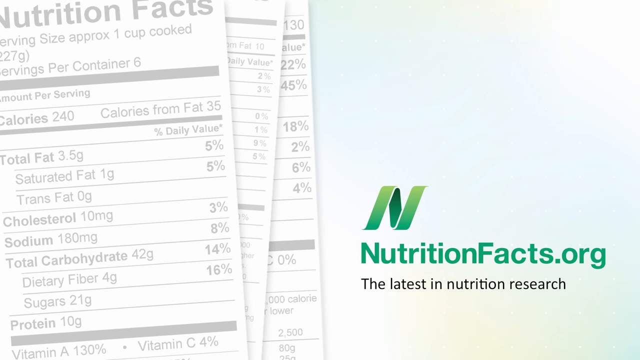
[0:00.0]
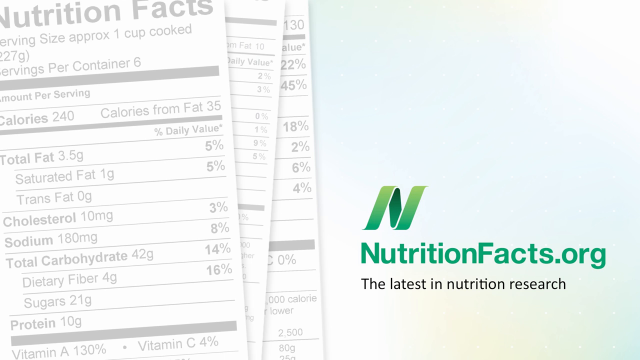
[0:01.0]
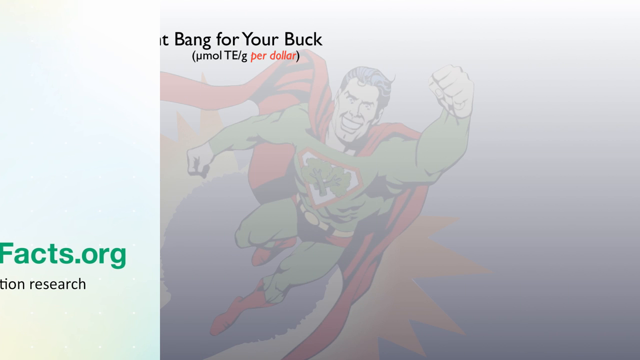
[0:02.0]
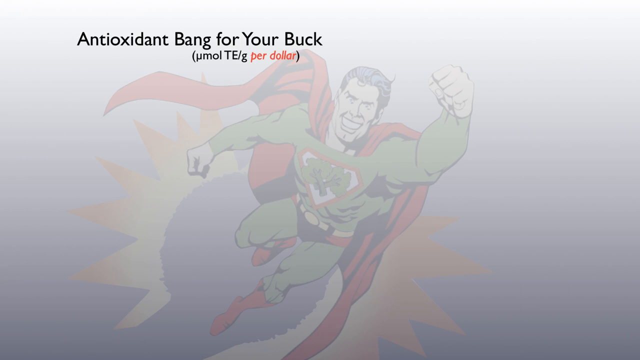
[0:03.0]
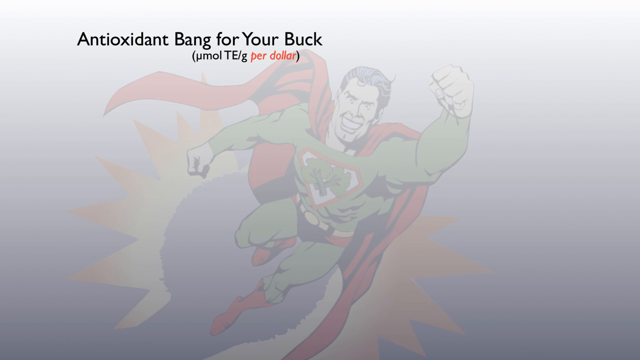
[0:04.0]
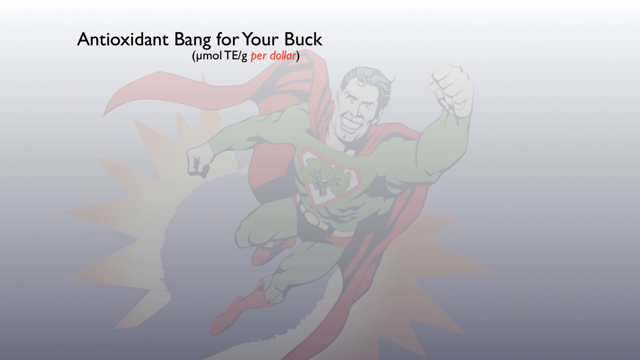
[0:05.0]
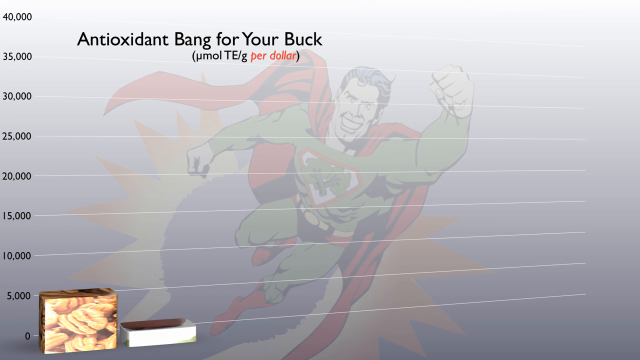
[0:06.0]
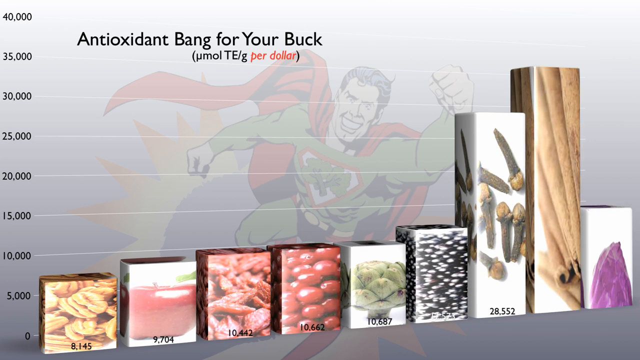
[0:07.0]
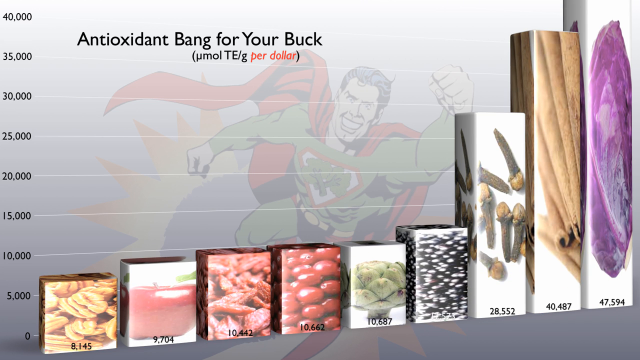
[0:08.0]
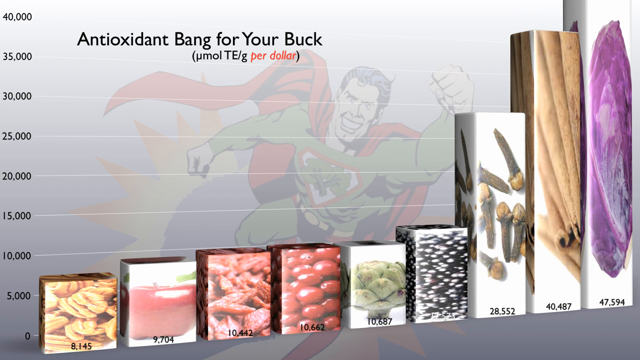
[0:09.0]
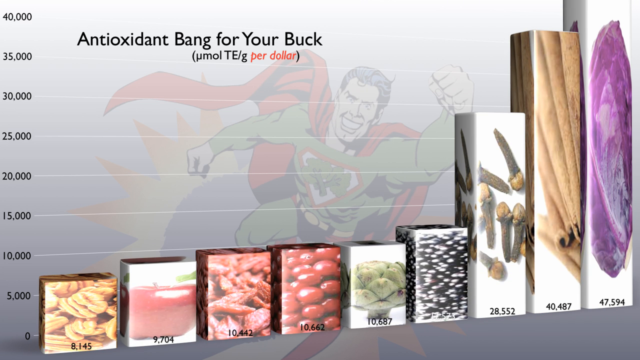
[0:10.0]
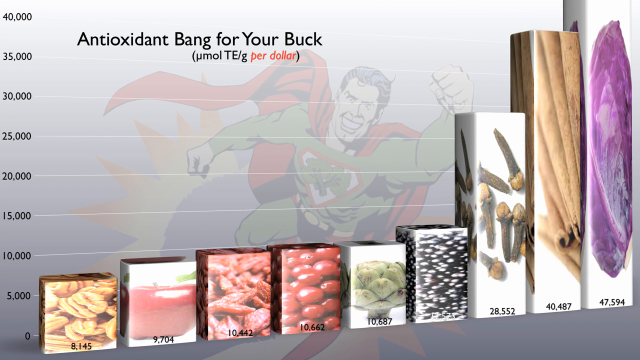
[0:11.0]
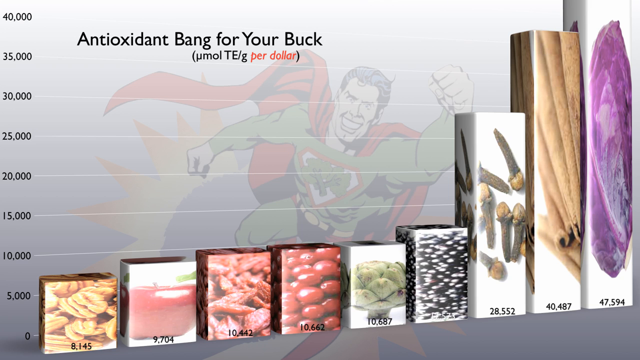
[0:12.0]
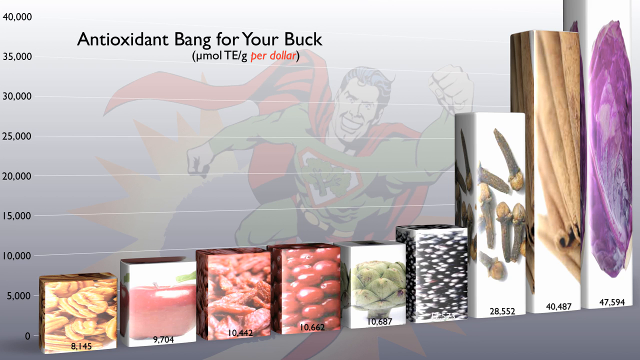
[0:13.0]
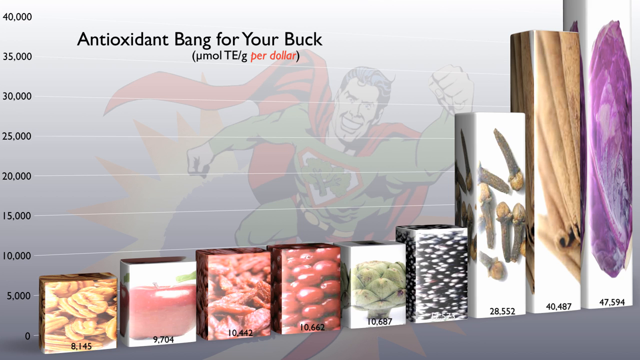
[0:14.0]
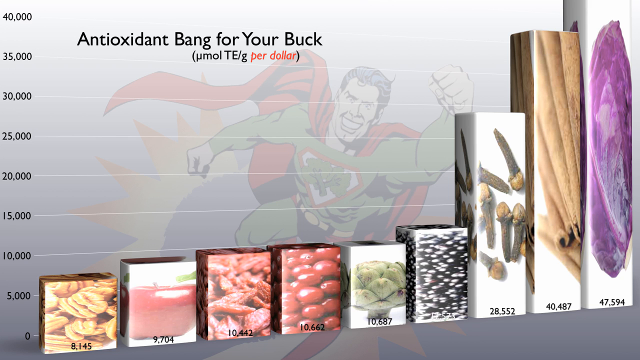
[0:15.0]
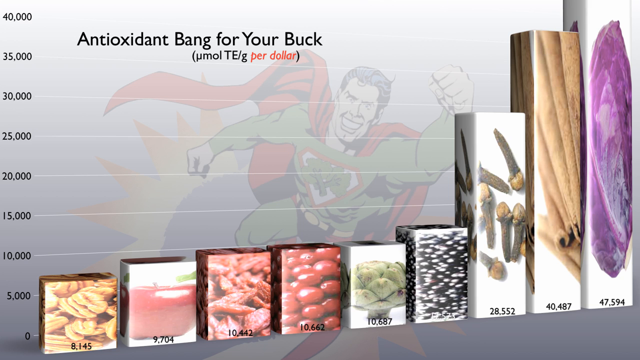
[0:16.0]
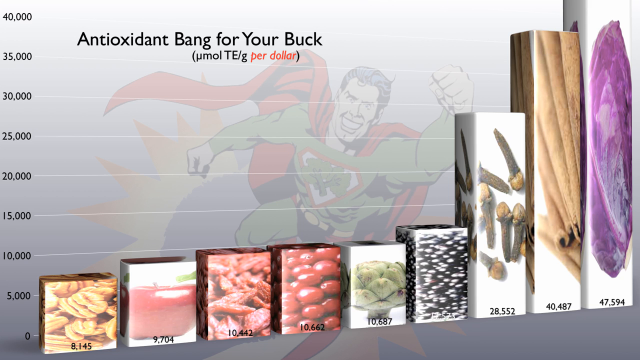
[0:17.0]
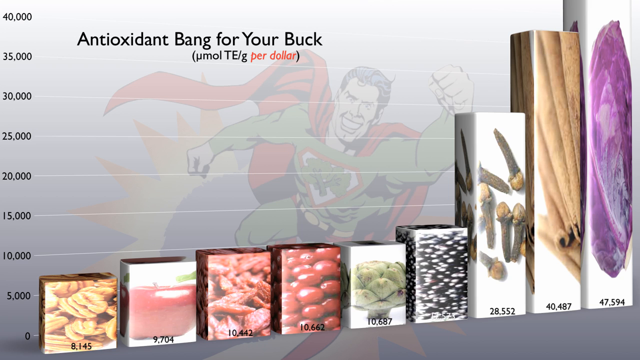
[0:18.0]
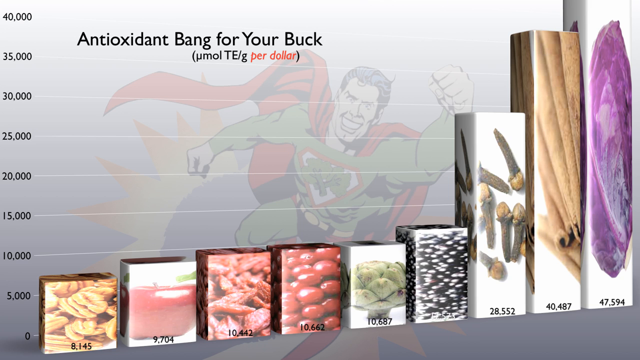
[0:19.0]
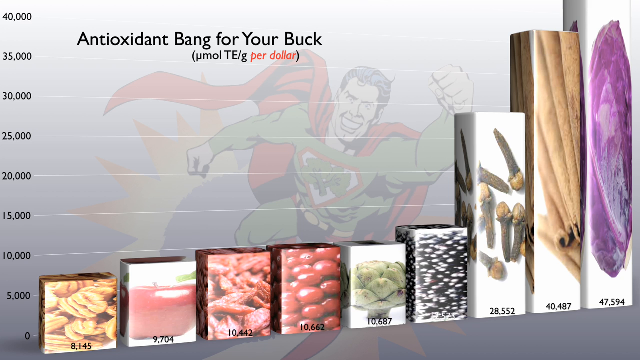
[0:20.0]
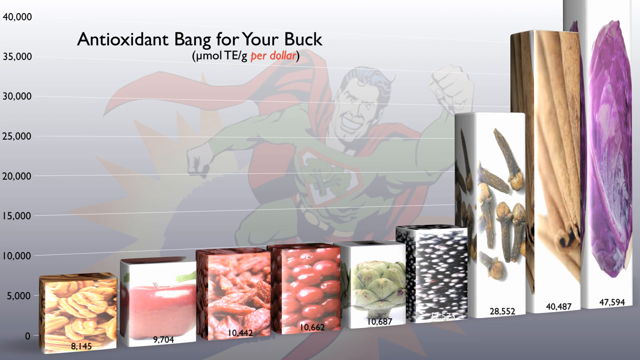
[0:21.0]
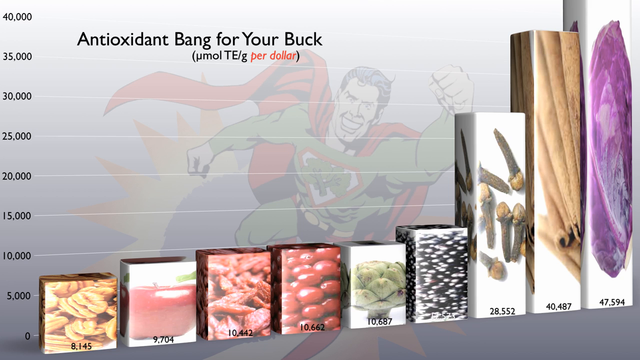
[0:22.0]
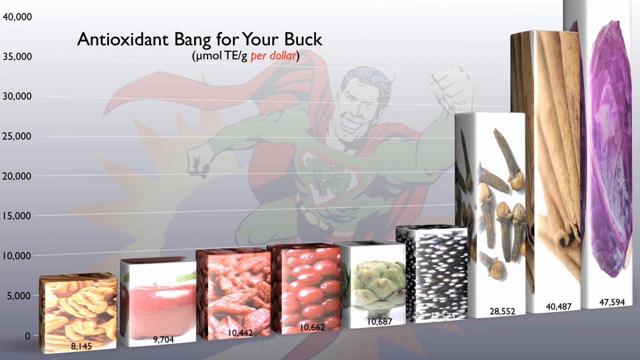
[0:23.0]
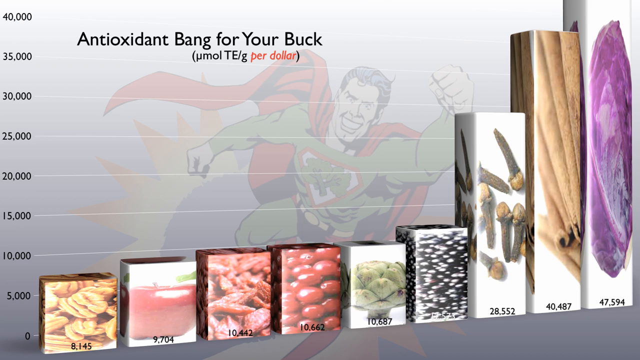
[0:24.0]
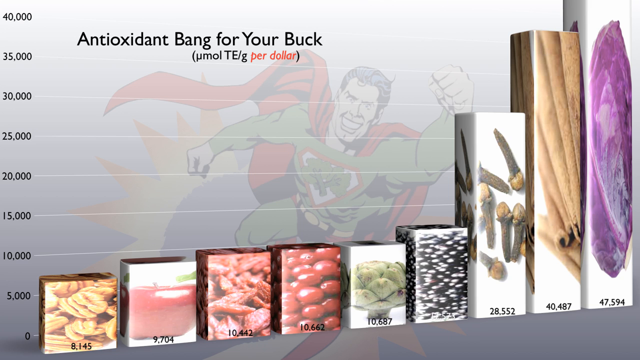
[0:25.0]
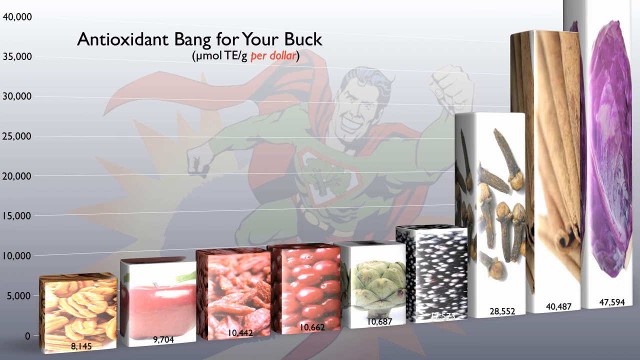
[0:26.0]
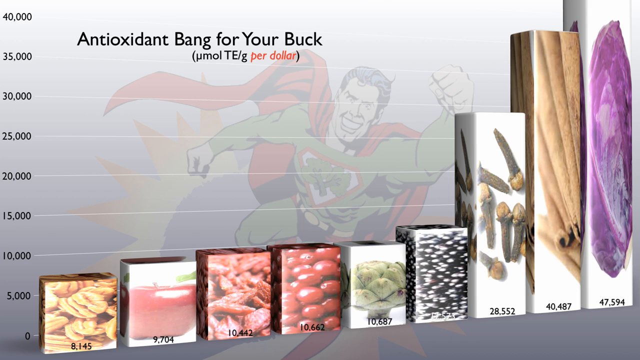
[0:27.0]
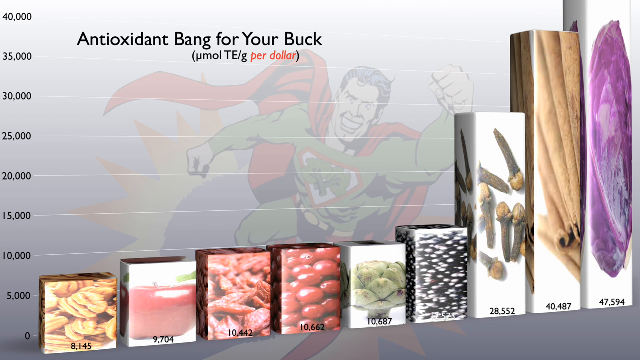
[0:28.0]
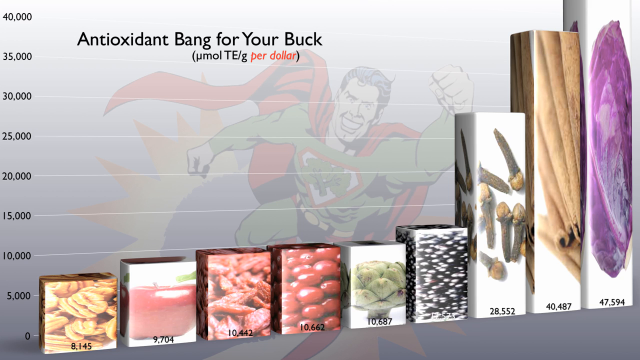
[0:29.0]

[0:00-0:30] The video opens on a screen with documents on top. On the left is a document written in faint grey, with some text large and some small. At the top it reads "nutrition facts," with a serving of approximately one cup and some information about calories. On the right side is "nutrition facts organisation" and "the latest nutrition research," with a logo above that text, written in green. The video then shifts to a faintly coloured cartoon in the background, with a tag in the centre whose text mentions antioxidants, followed by "per dollar" in red. More information appears after that.